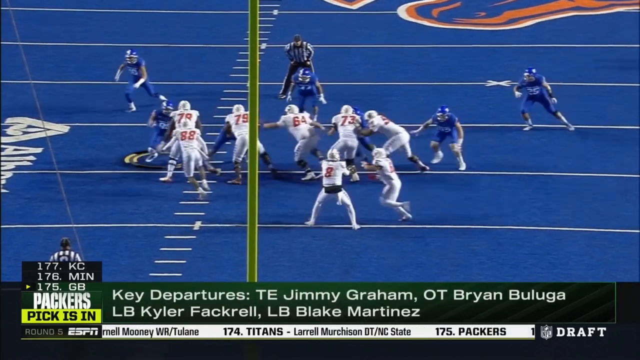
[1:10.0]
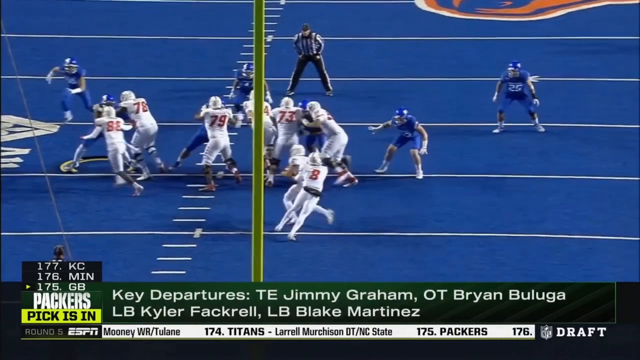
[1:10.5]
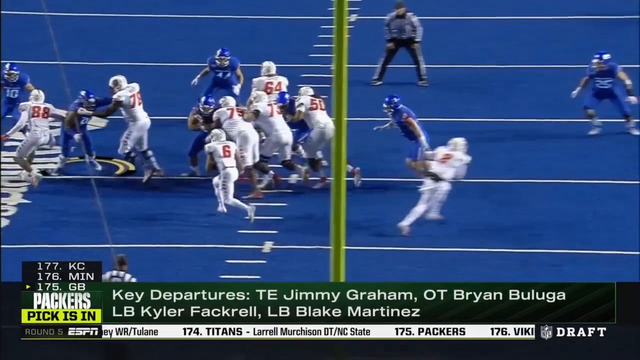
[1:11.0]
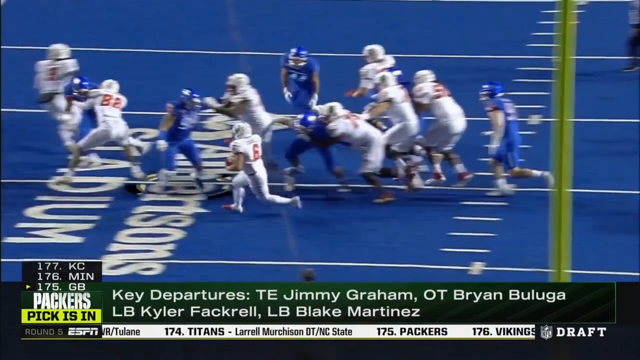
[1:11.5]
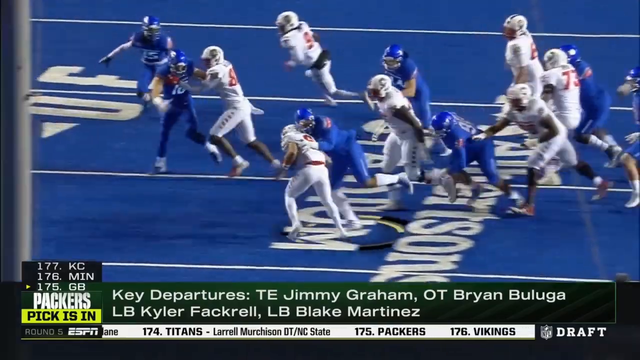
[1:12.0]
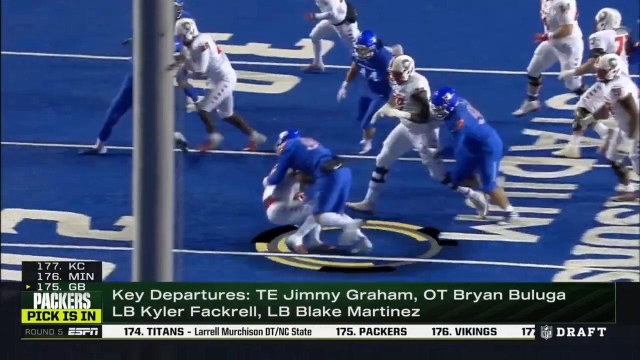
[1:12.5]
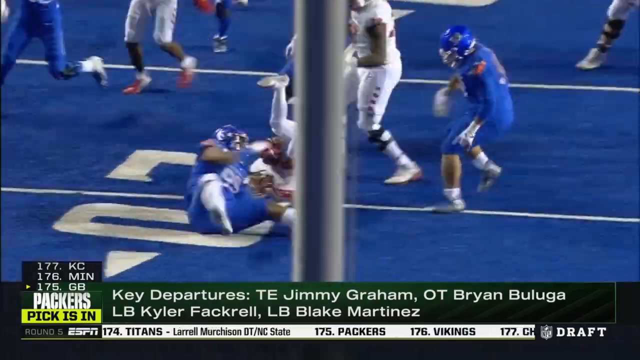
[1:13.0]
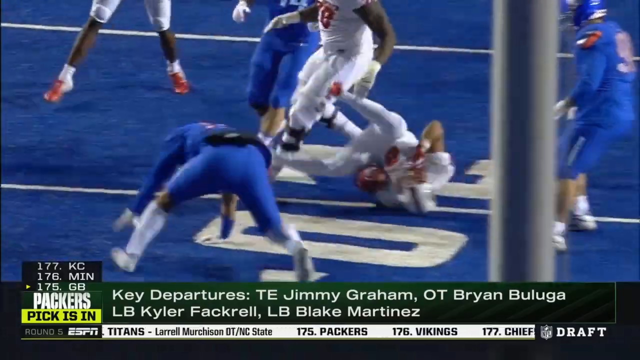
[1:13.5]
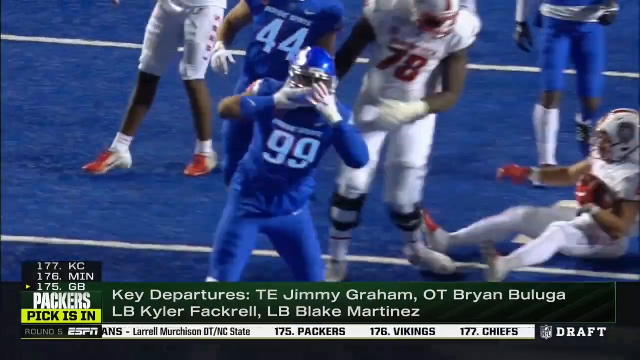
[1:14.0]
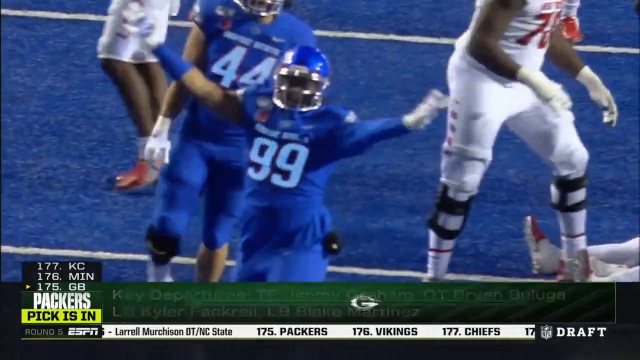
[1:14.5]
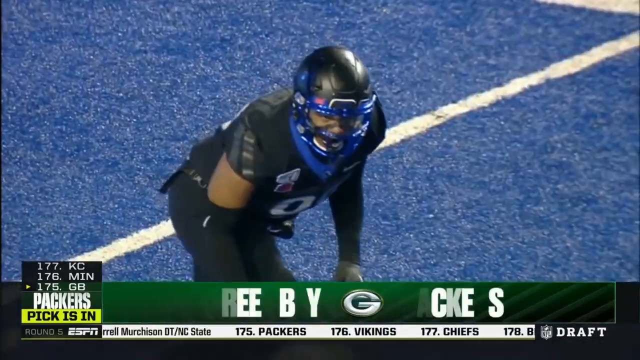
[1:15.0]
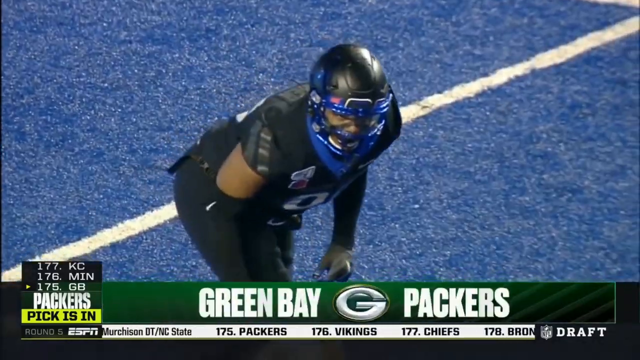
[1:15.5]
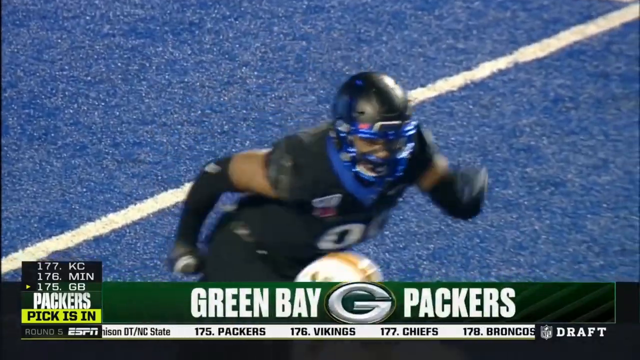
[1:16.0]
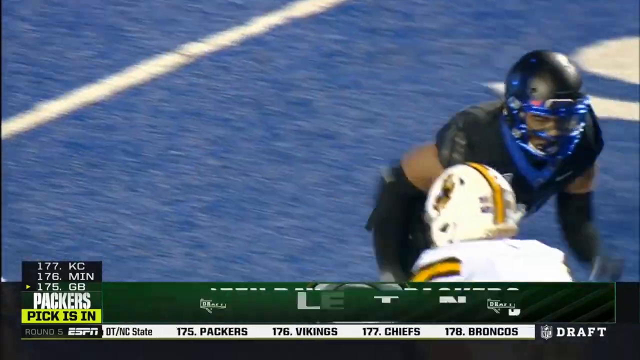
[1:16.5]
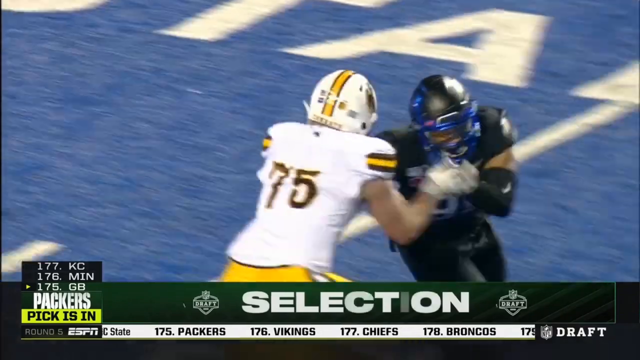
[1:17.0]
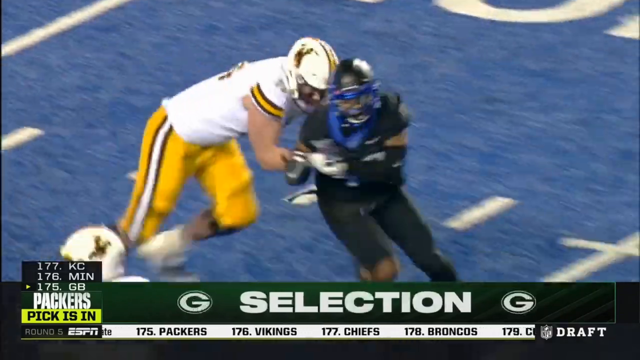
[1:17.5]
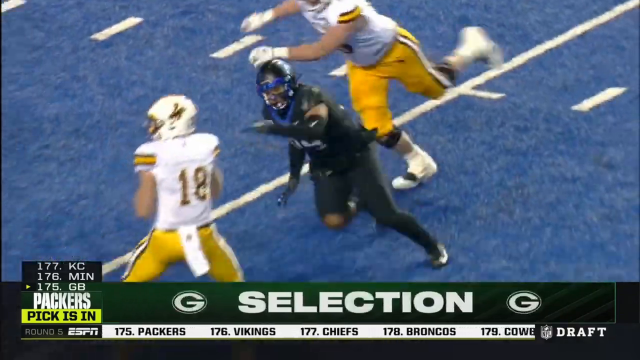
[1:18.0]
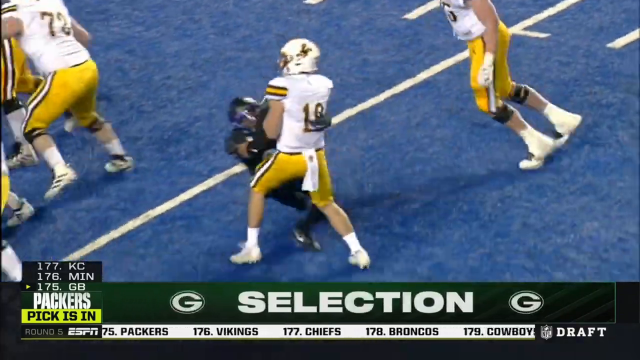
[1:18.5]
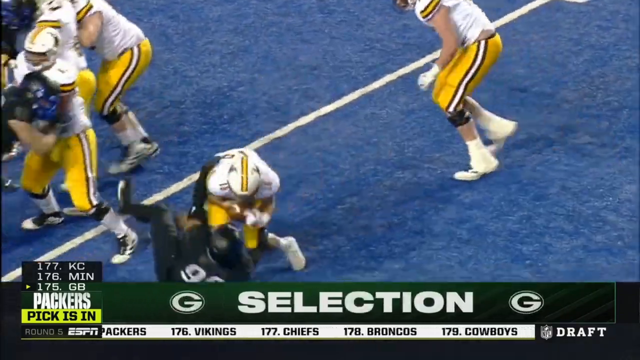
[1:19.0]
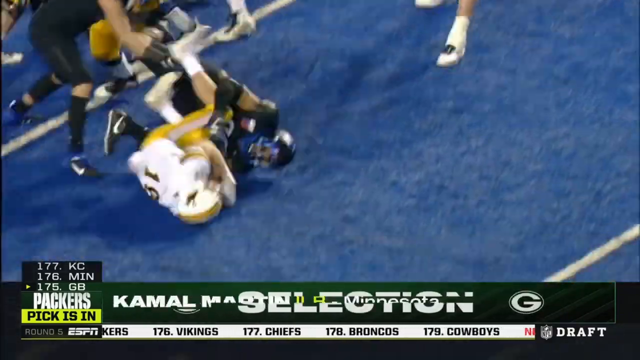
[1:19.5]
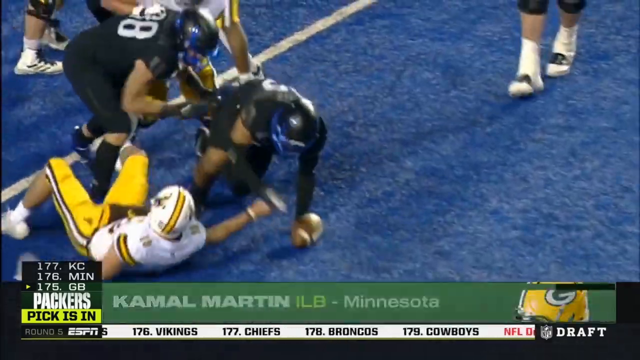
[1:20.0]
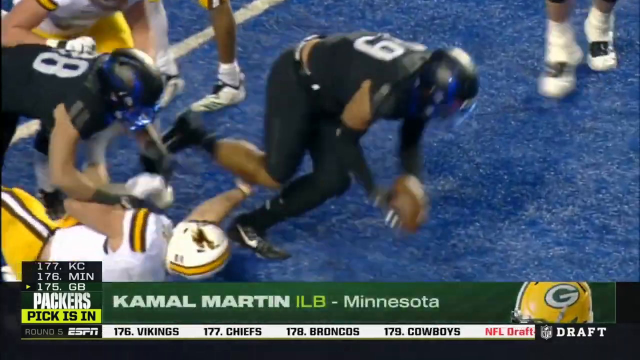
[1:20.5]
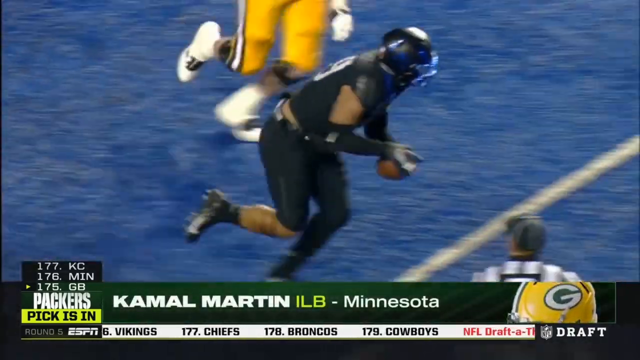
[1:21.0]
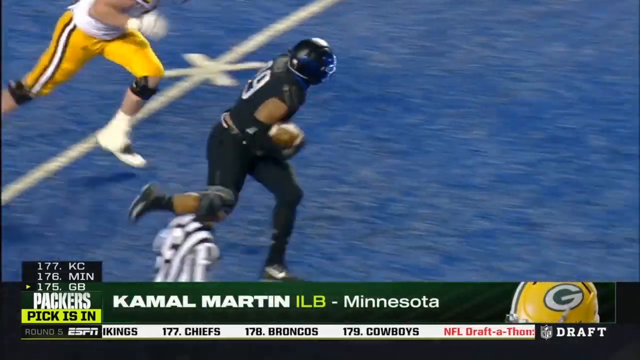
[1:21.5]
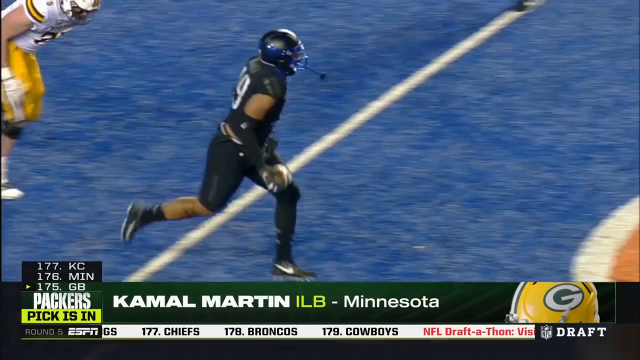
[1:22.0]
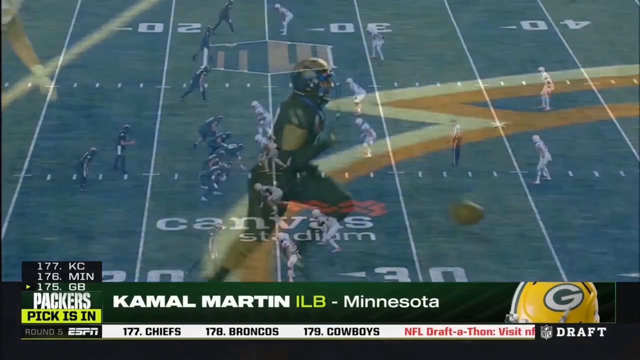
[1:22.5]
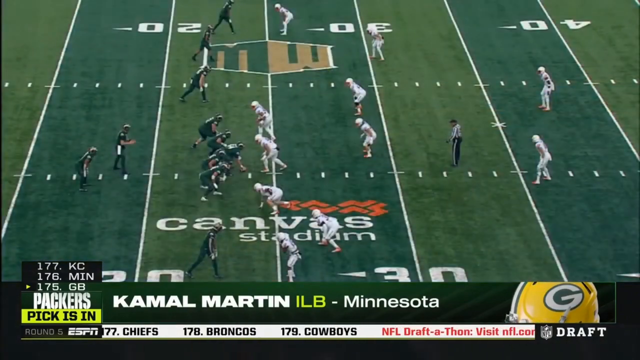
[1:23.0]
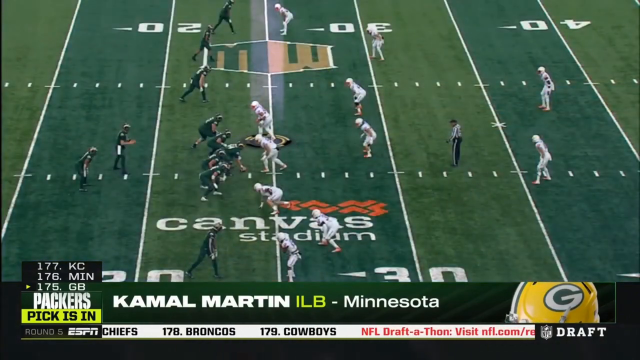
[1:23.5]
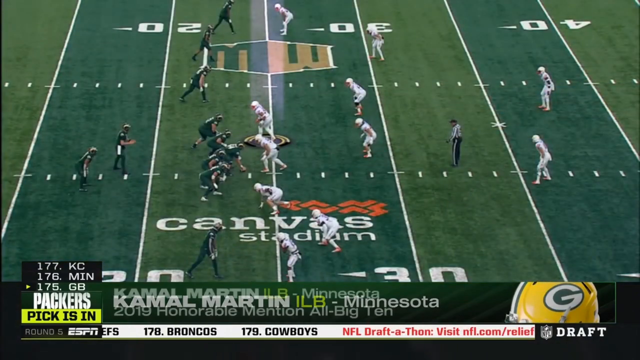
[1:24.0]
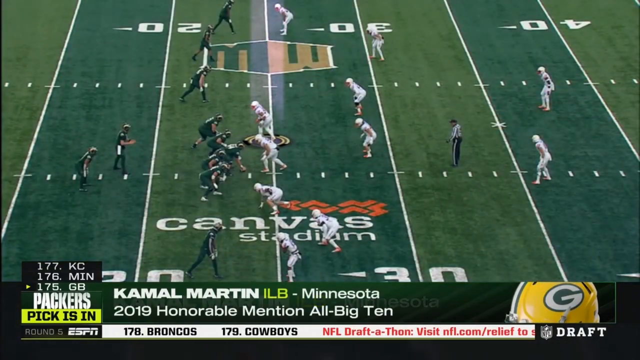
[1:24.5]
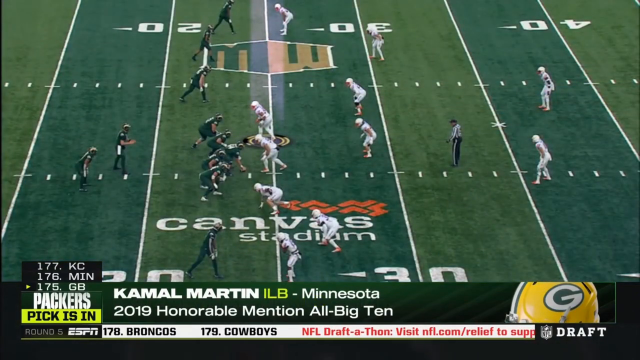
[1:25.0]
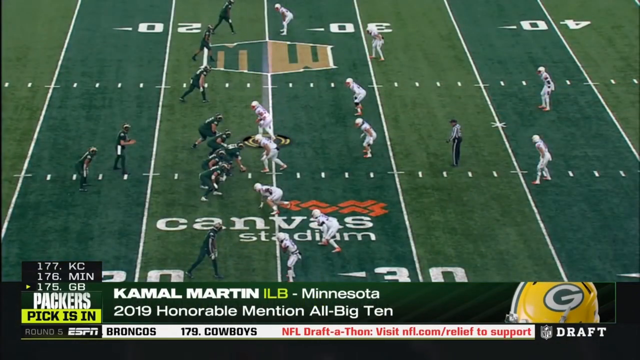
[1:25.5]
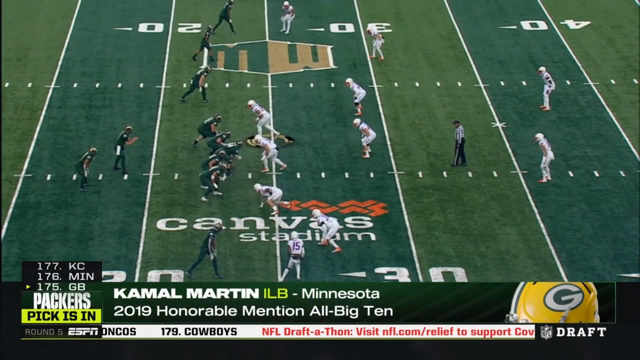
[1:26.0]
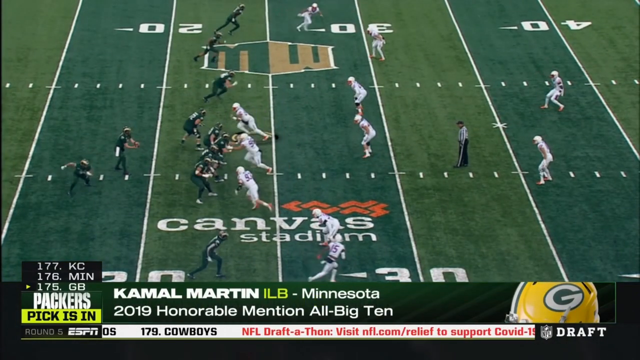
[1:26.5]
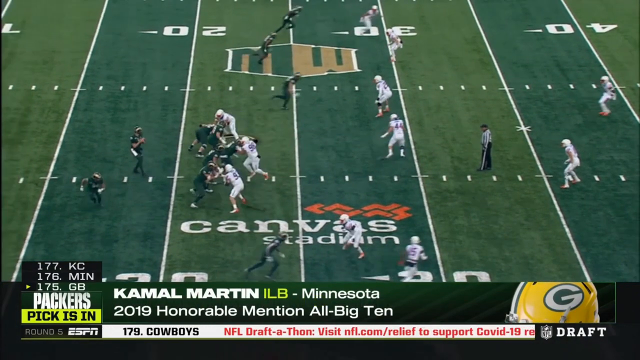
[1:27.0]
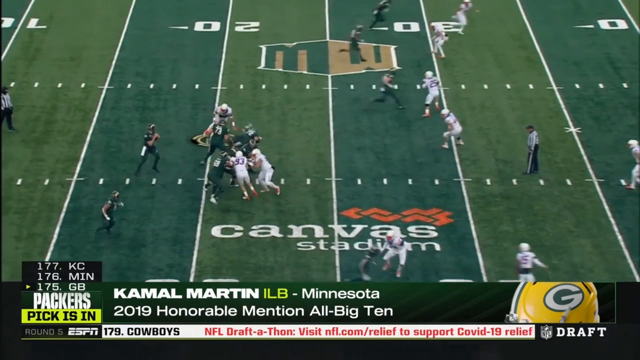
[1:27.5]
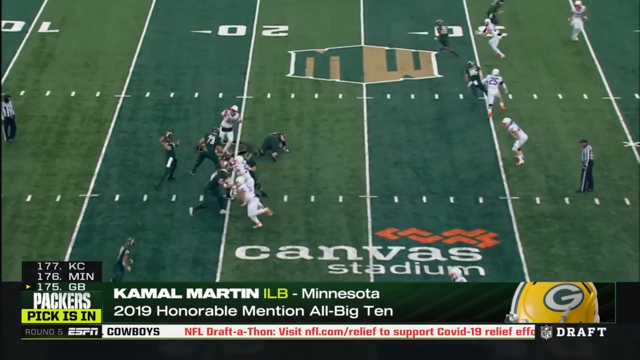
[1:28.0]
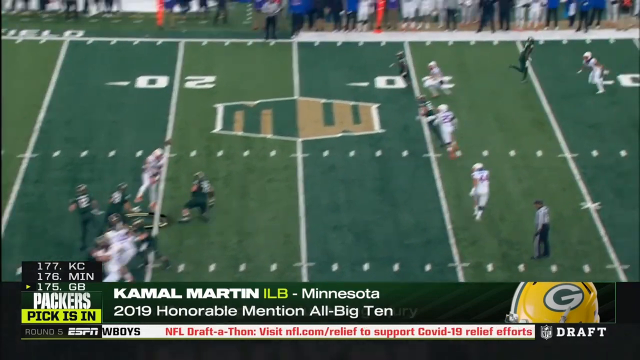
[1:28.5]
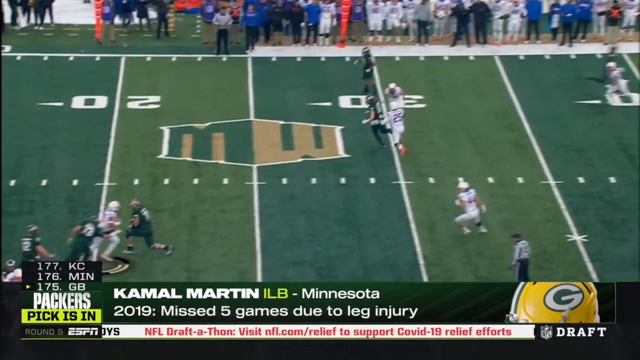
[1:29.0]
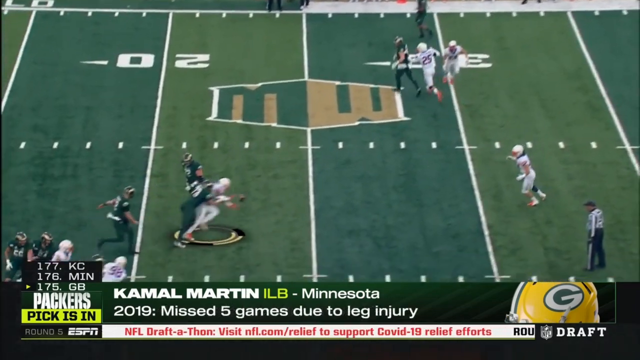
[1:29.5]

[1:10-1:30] On a blue field, a team in white plays a team in blue. Weaver is highlighted on the left side of the play. A player in white tries to block him off, but he escapes his grasp, tackles the quarterback to the ground, and then blows a kiss to the crowd. Next, Weaver, in all black, runs past a player in white and gold and tackles a quarterback, turning over the ball and running away with it. Weaver is then highlighted on a pitch against an all-green team. In the middle of the field, he sidesteps the first person, then jumps very high in front of the quarterback as the quarterback tries to make a pass, intercepting the pass in the air.